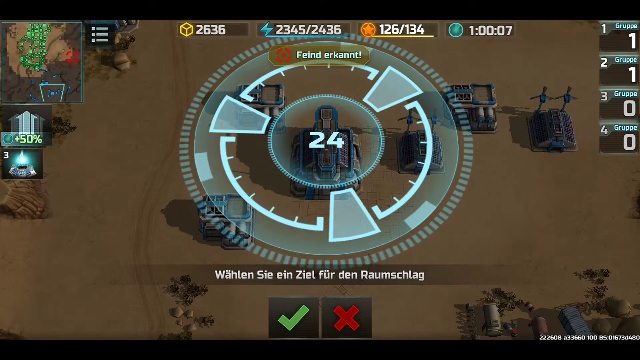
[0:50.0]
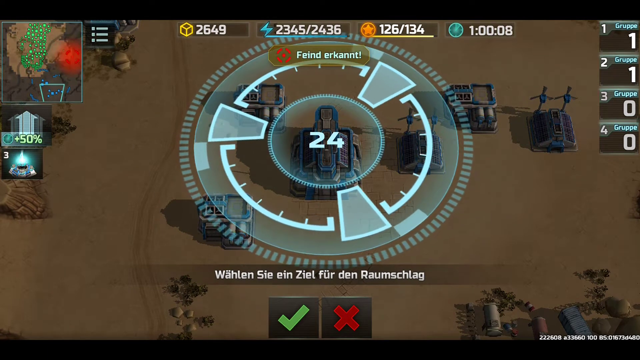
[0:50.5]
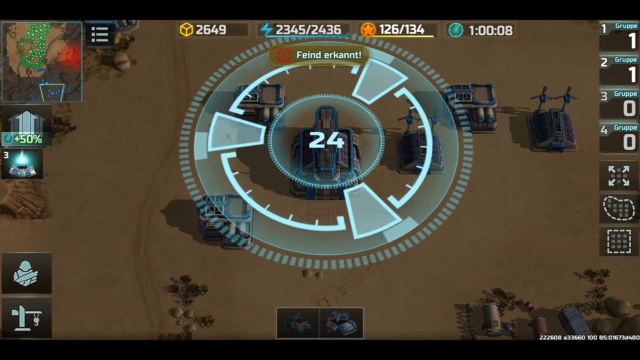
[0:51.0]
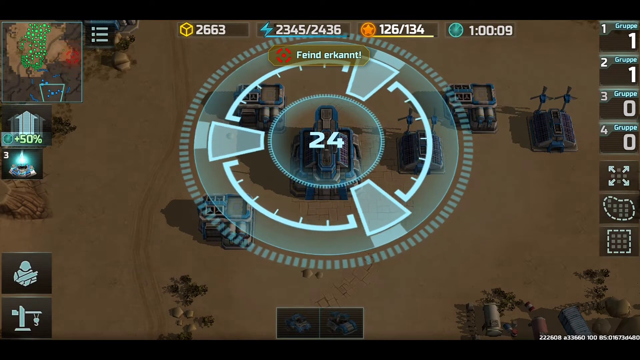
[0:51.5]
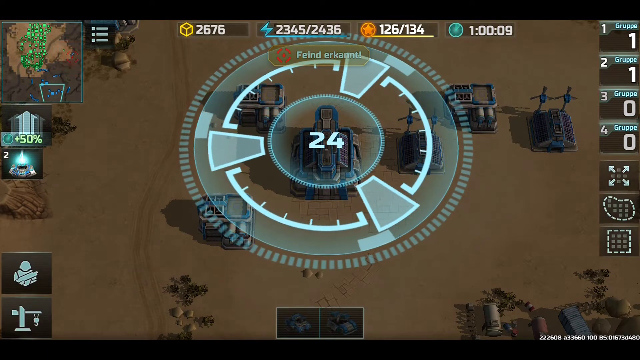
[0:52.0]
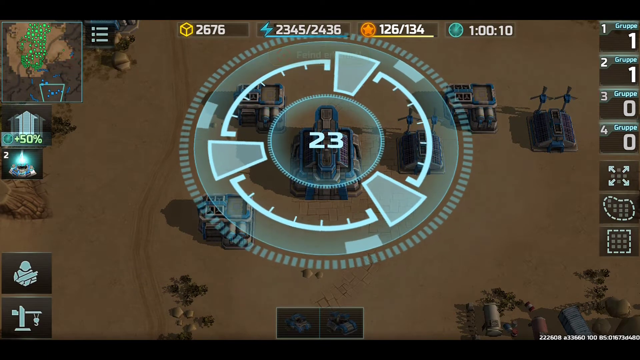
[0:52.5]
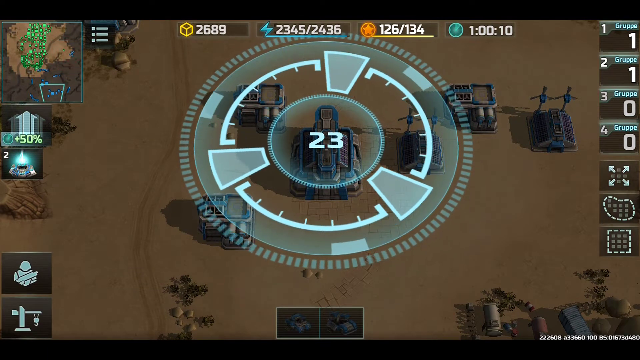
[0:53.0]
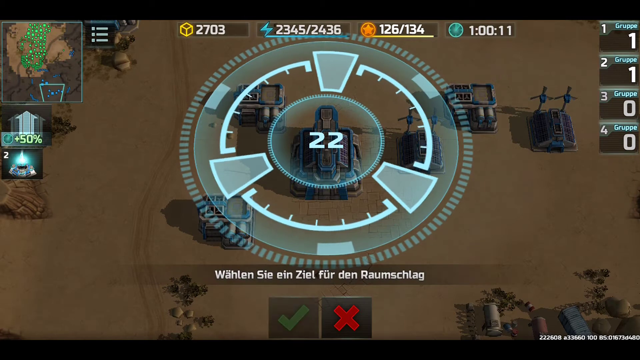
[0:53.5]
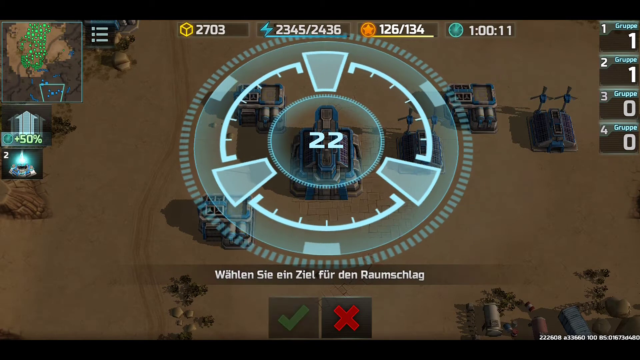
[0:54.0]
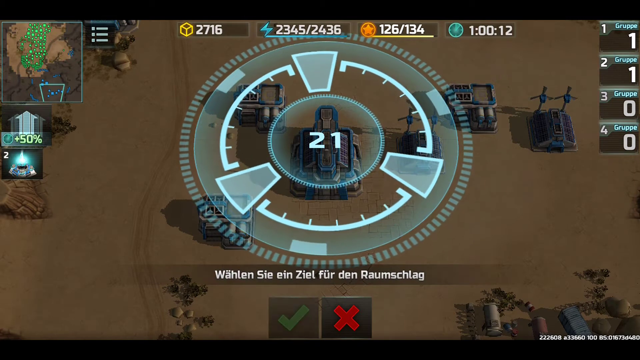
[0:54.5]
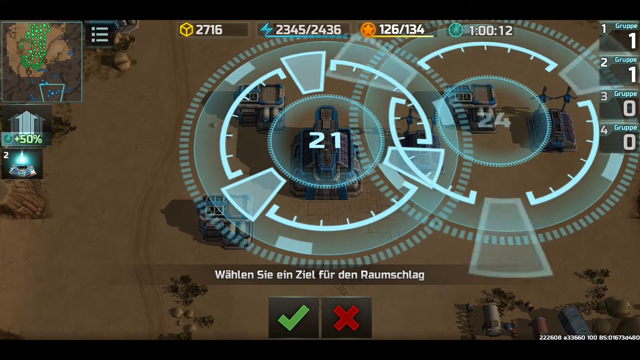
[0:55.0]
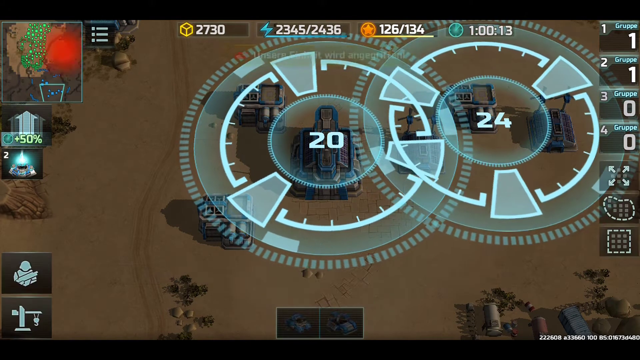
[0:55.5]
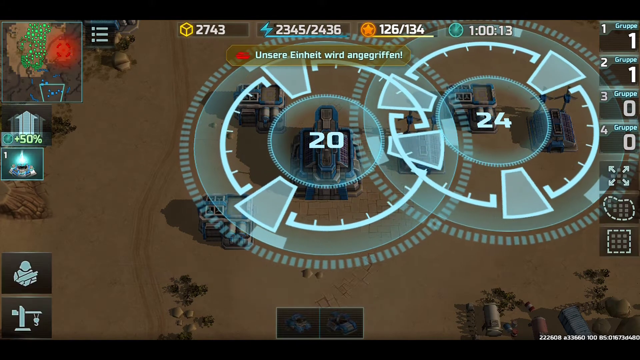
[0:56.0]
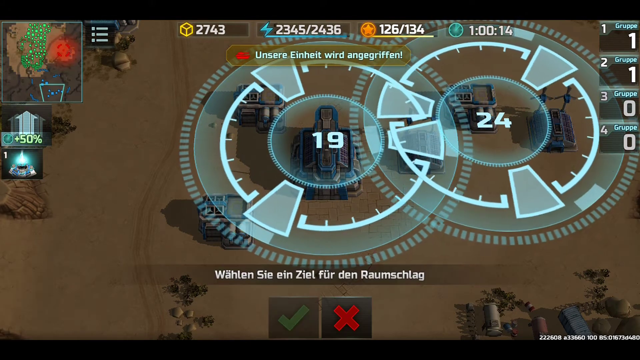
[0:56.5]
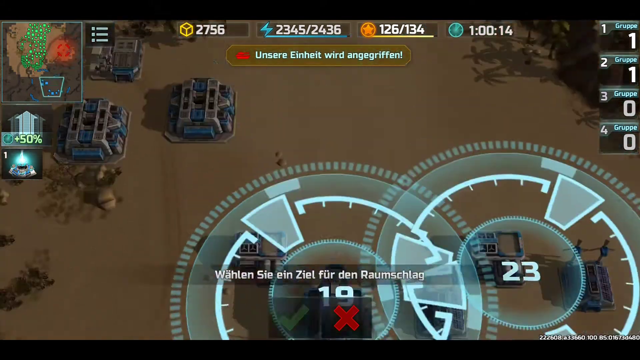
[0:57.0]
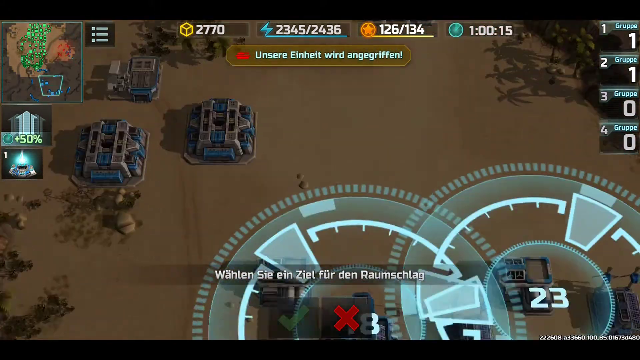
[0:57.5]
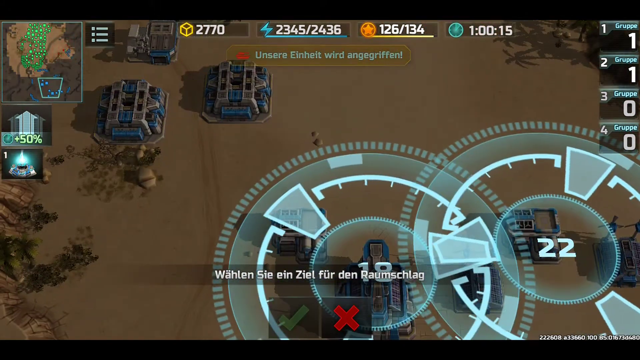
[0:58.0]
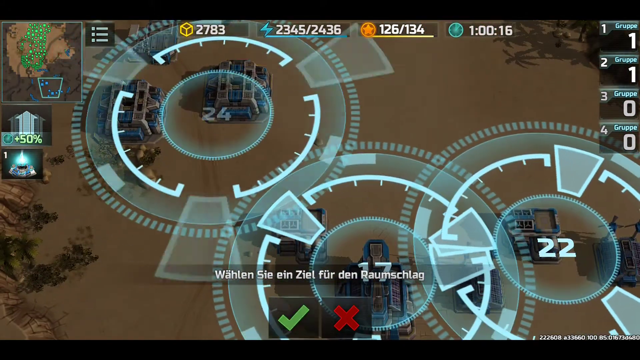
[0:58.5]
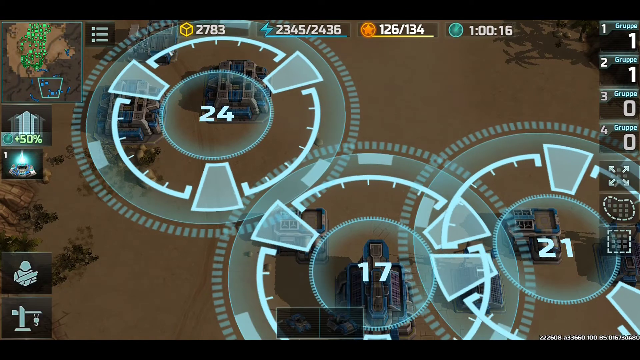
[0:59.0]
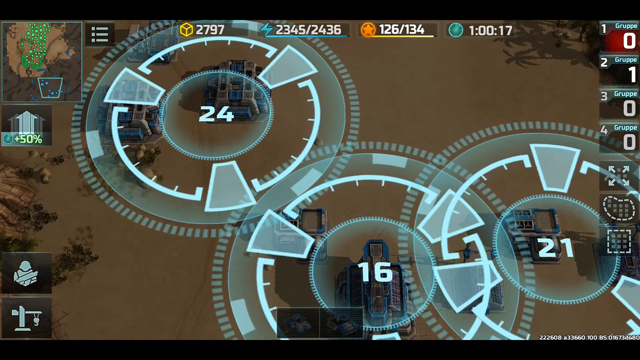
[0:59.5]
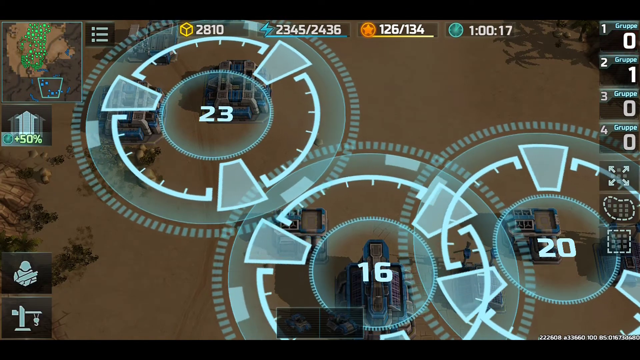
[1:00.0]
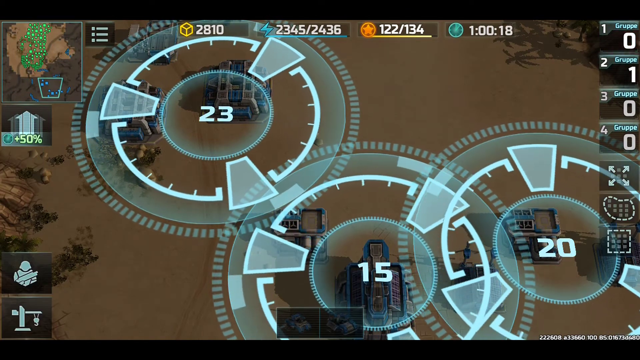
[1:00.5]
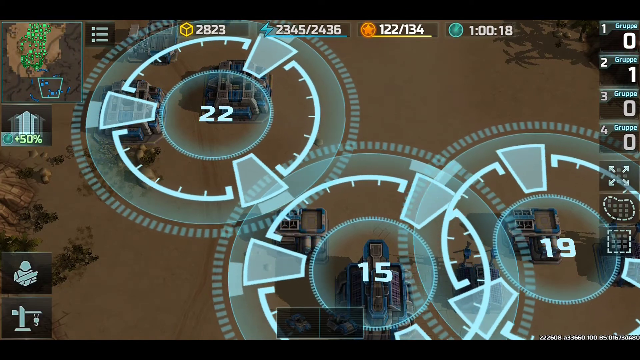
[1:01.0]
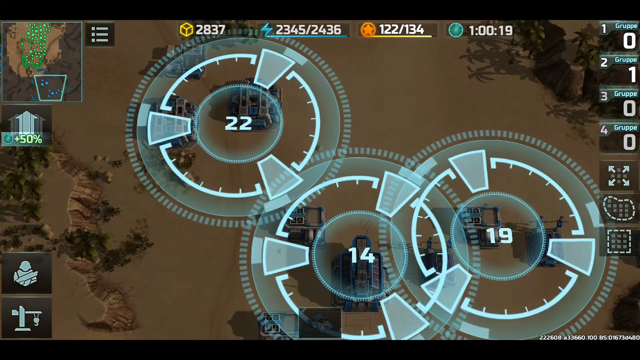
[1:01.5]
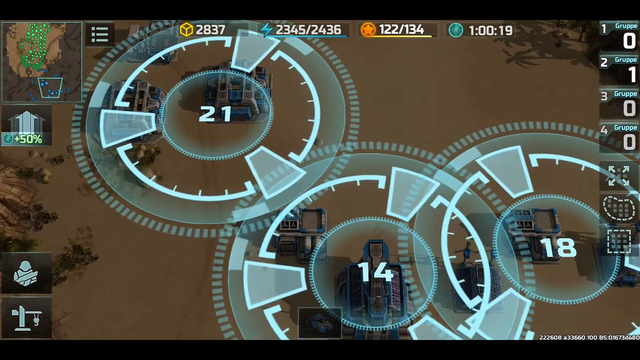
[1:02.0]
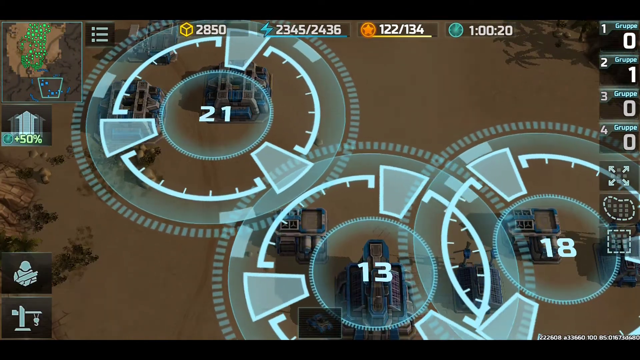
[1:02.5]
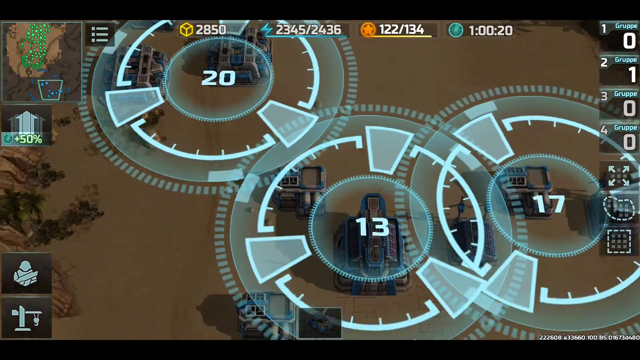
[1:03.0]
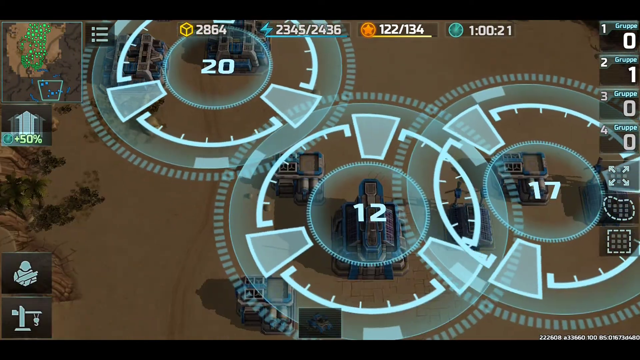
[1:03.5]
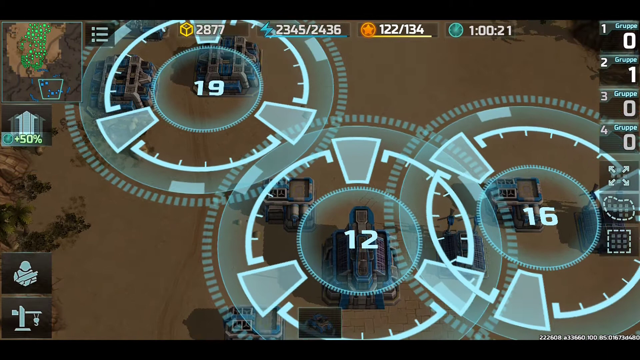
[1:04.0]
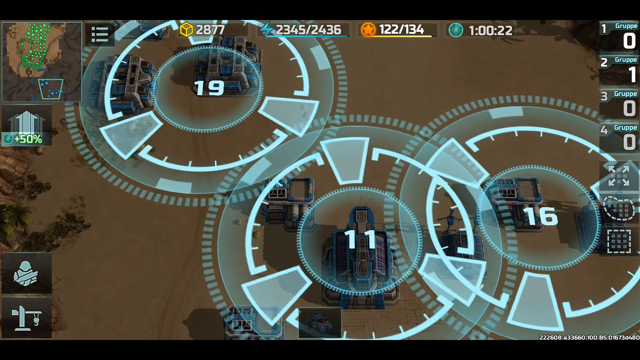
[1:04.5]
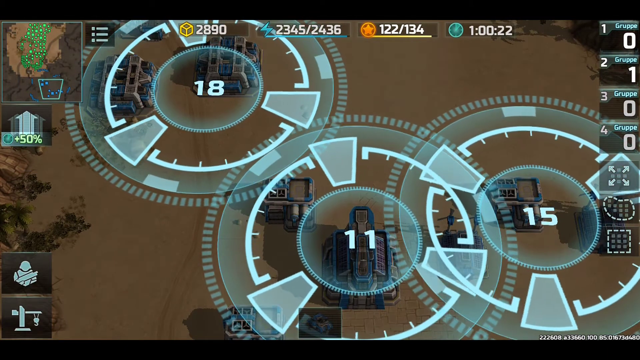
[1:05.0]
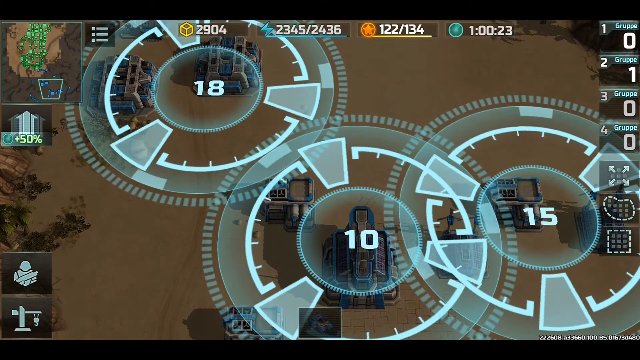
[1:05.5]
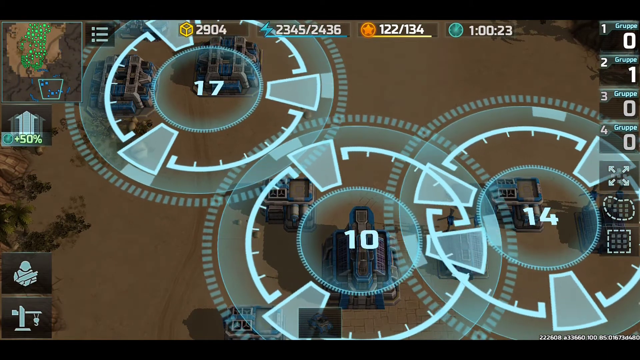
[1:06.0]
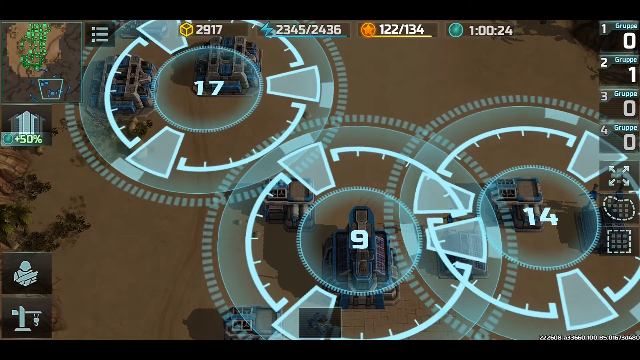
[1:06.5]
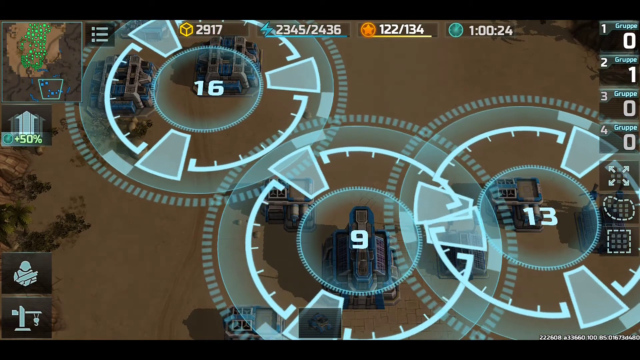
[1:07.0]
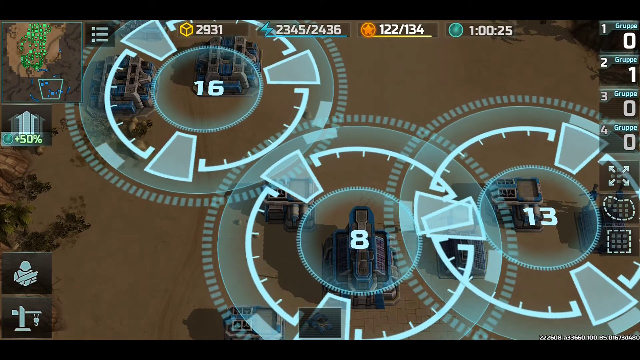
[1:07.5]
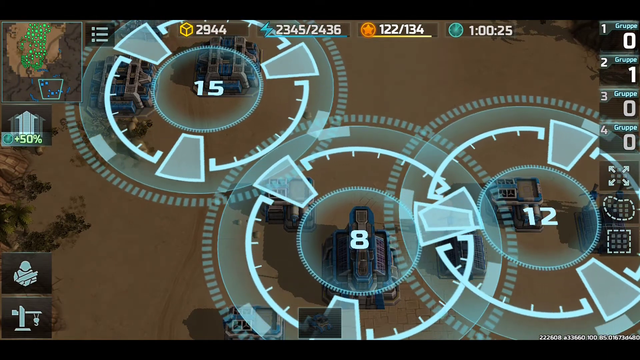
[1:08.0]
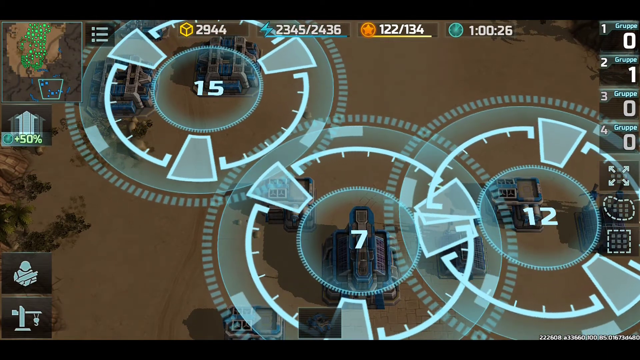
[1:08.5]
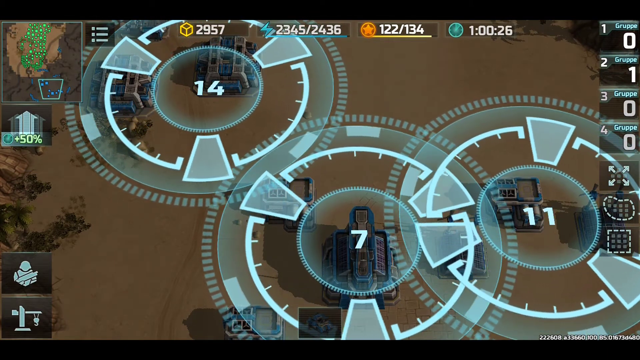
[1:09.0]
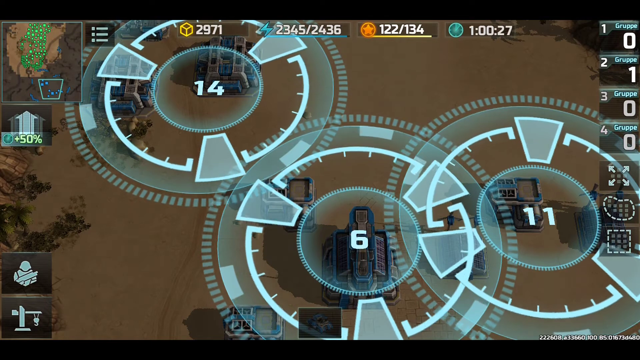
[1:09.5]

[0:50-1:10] A blue dial is shown over the game, dialing. Another dial appears and overlaps the original one, then a third appears and overlaps that. Each has numbers in it that are constantly changing. The dials are over brown territory that looks like land. There are scores on the upper right-hand side, and on the left is a map showing a smaller version of the territory. The dials turn ever so slowly. The view bounces back to the original single dial and then shows the other two dials turning, continuously going around and around very slowly. The territory is very still; vehicles are parked and stopped, not doing much of anything but sitting there.